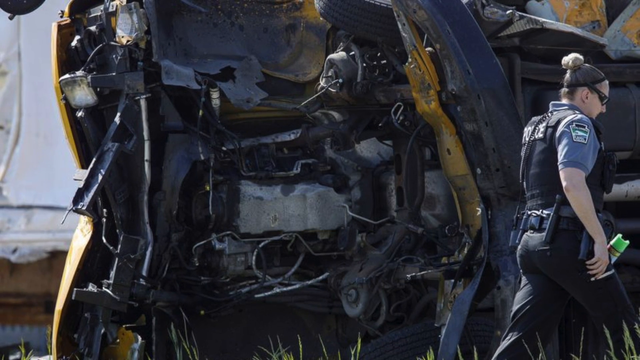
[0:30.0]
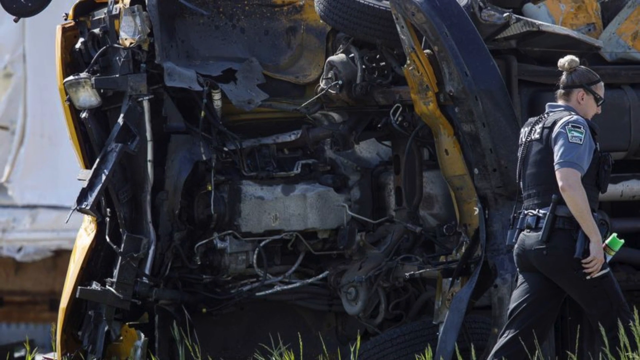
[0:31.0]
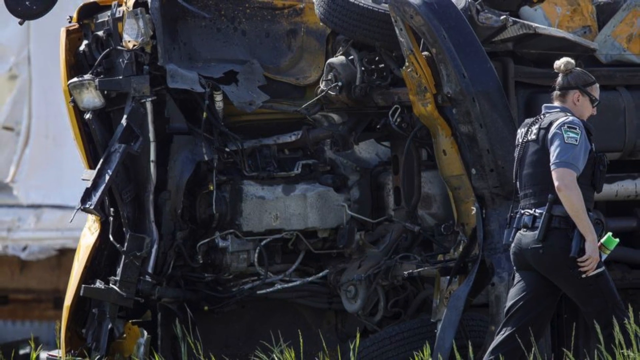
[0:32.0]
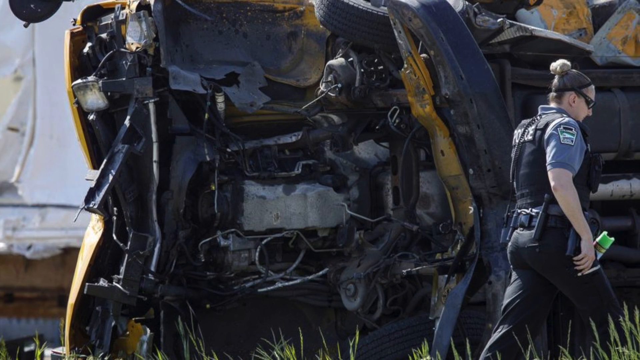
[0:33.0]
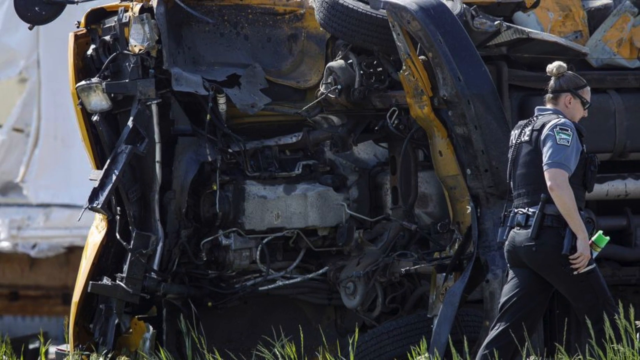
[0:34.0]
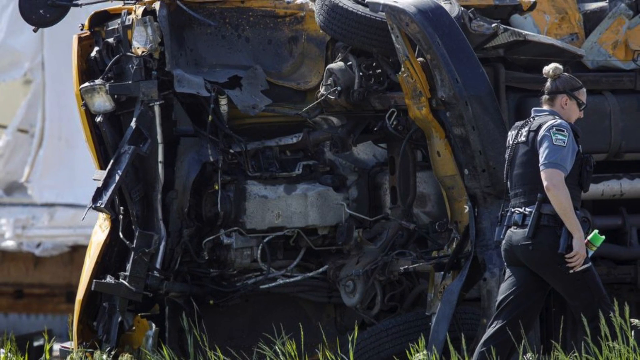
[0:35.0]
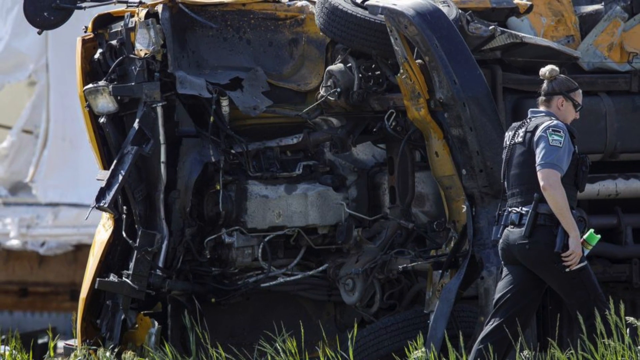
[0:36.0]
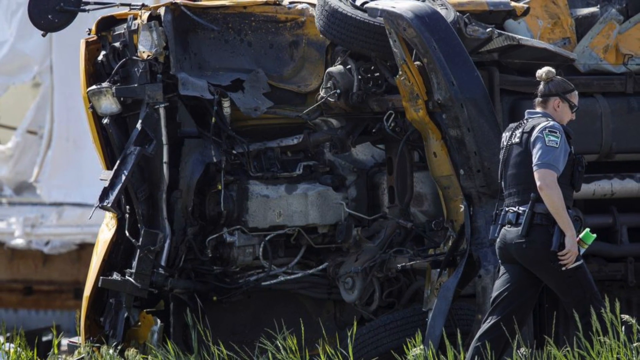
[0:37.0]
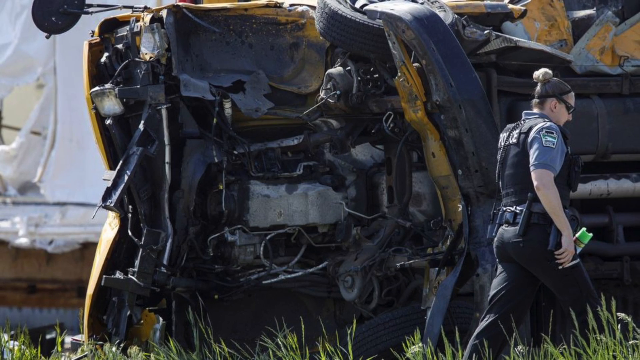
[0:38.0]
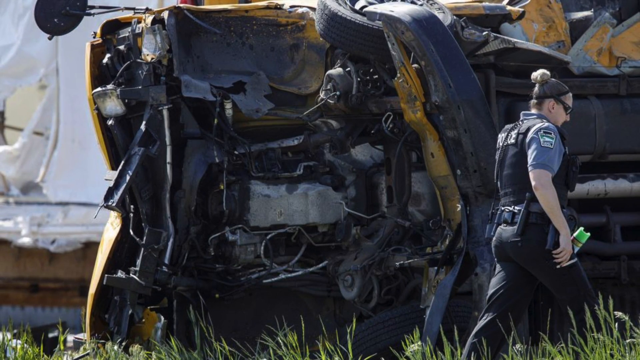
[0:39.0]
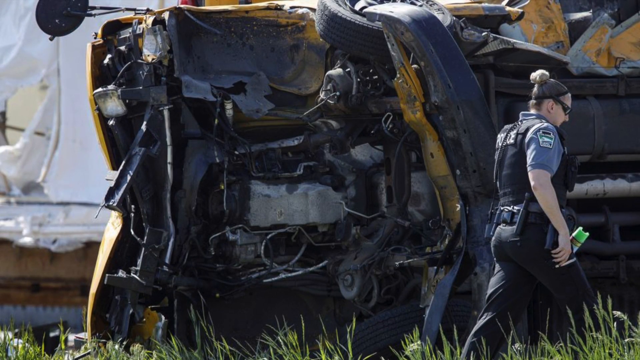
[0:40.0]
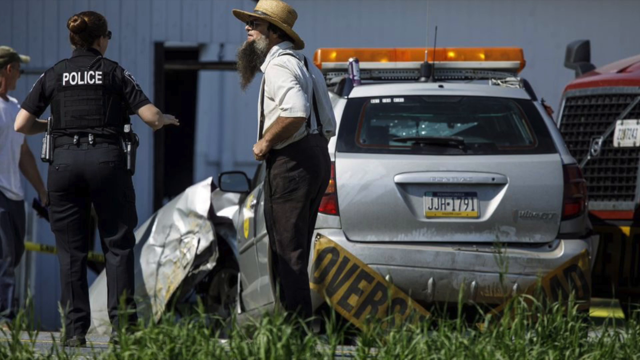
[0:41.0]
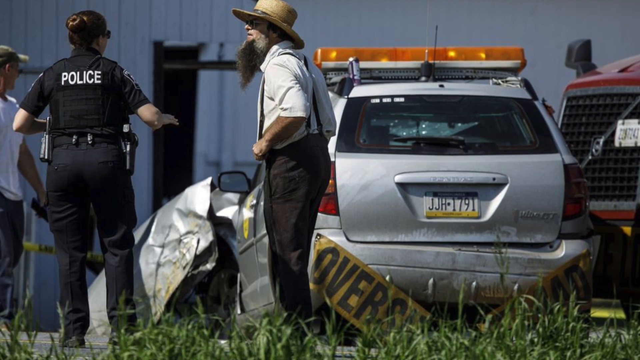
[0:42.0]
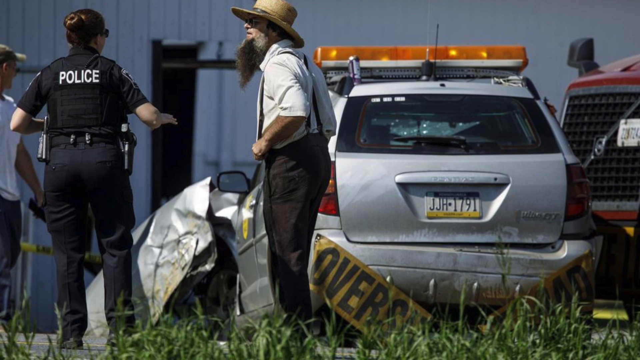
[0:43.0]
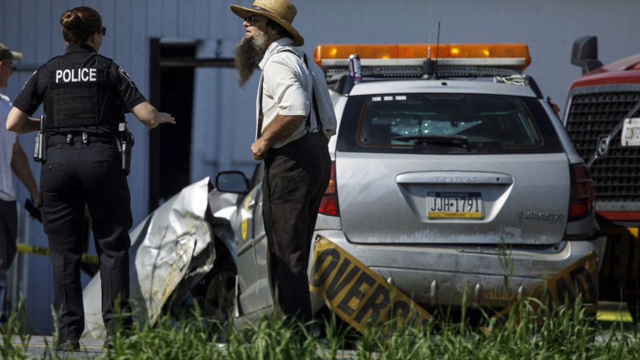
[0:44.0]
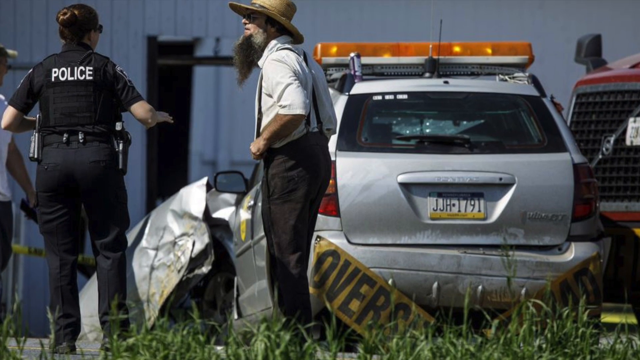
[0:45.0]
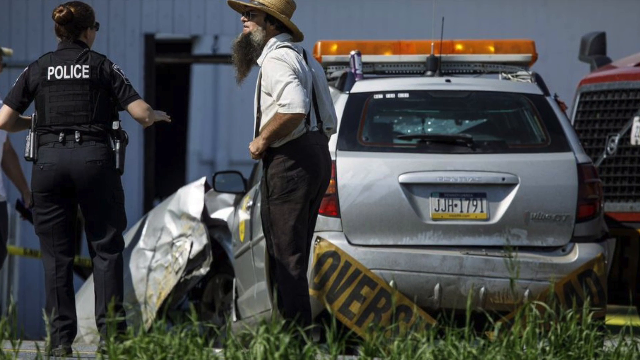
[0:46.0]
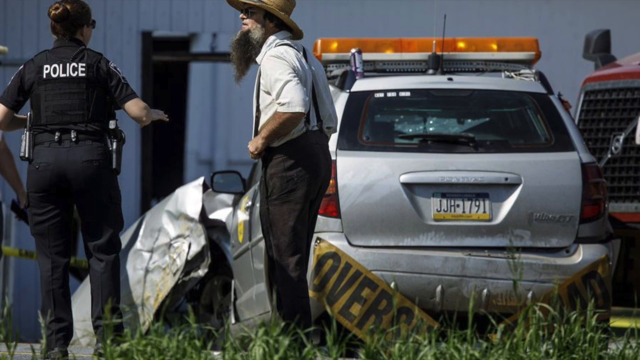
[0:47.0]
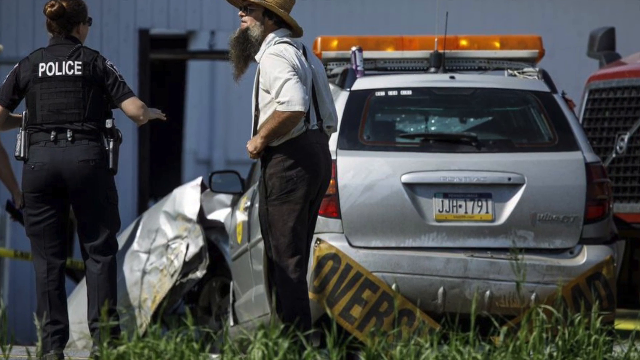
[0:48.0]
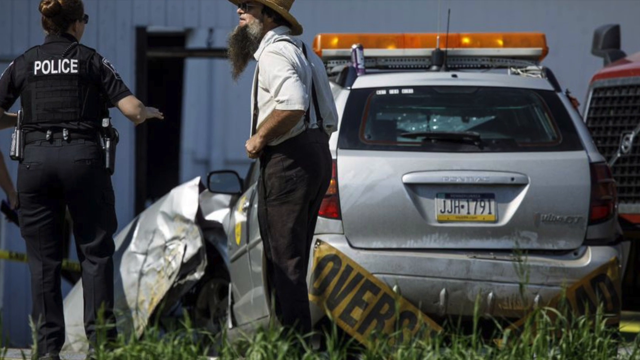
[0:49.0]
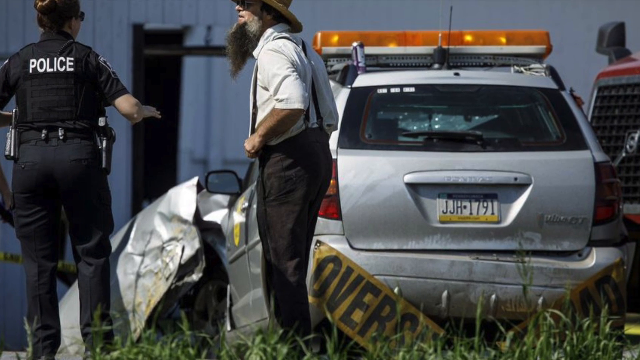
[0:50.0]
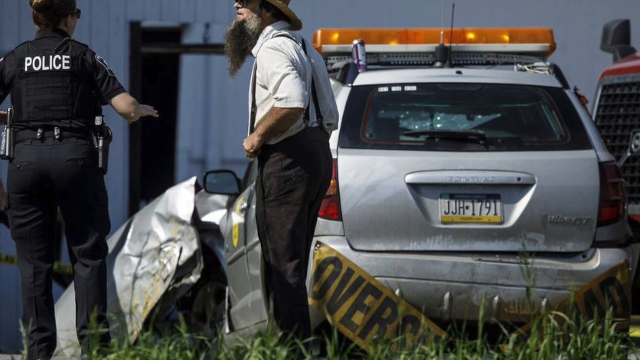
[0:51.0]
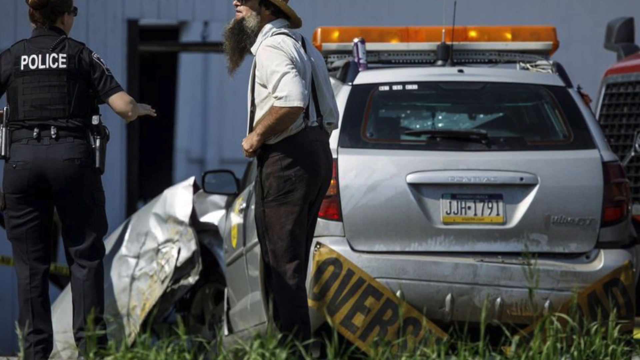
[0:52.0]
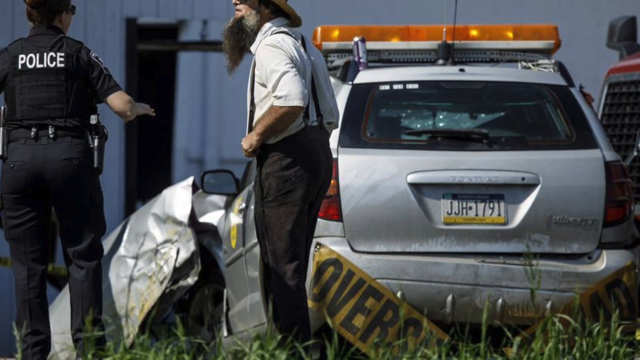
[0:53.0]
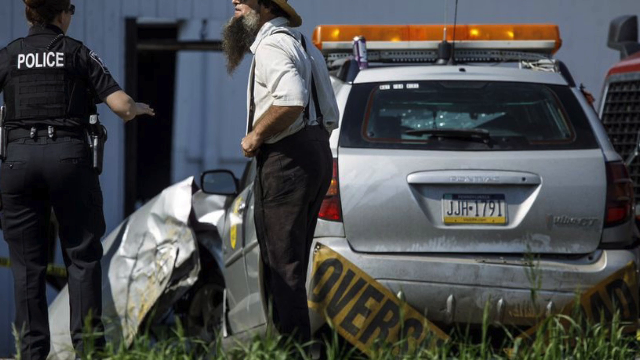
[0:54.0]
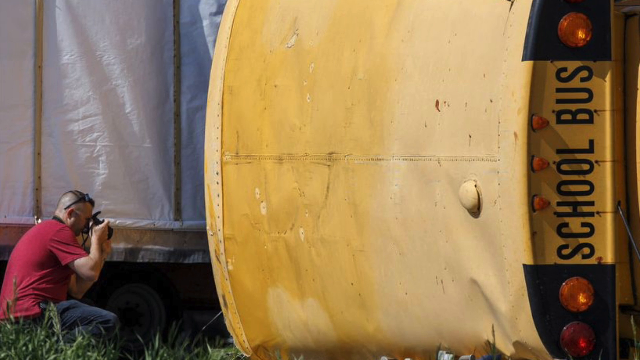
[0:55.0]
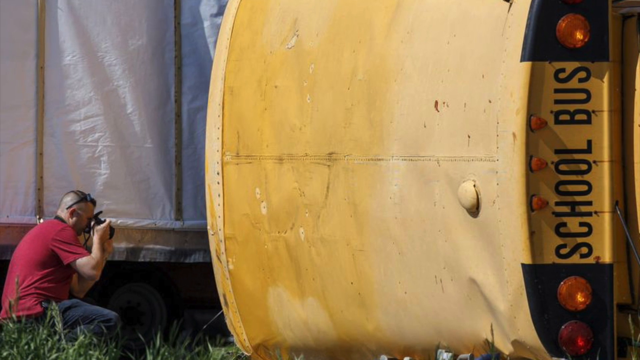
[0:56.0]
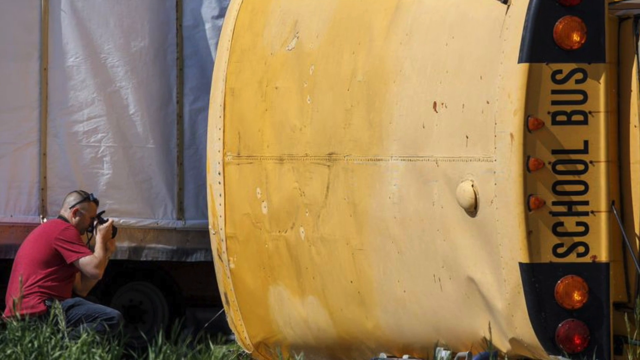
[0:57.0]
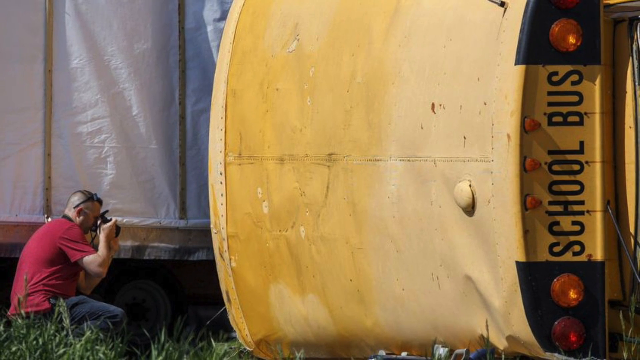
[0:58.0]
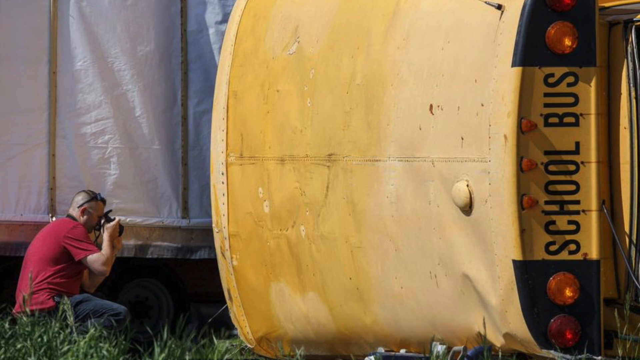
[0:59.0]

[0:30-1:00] A policewoman with brown hair, wearing a bulletproof vest that says "police", walks in front of what looks like the underside of one of the overturned vehicles, apparently holding something like a spray can. The scene cuts to another police officer, her back to the camera, talking to what looks like an Amish man in pants with suspenders, a white shirt rolled up to his elbows, and an Amish-style hat. The view pans toward the silver car from the wreck; torn off its back bumper is a yellow sign that says "oversized load", with yellow flashing lights on top. It pans back to a man with sunglasses on top of his head, a marine-cut haircut and a red shirt, taking a picture of the top of the bus, where a label now visibly says "school bus".